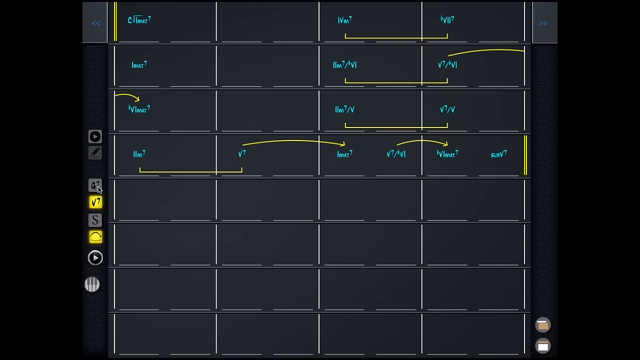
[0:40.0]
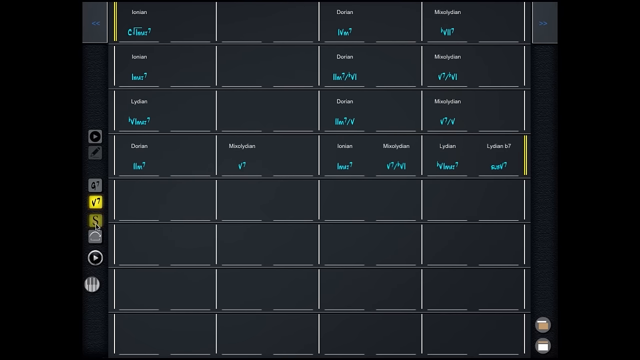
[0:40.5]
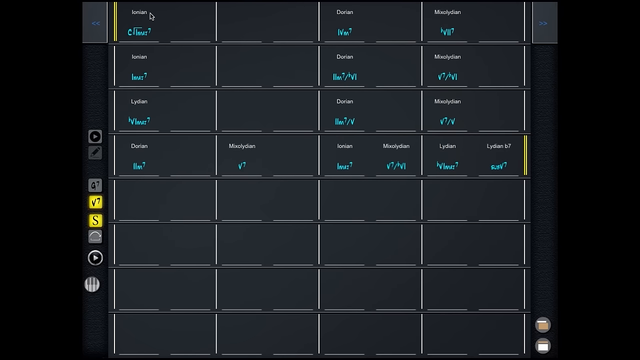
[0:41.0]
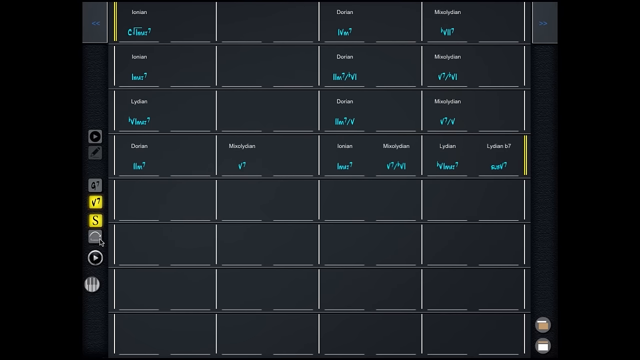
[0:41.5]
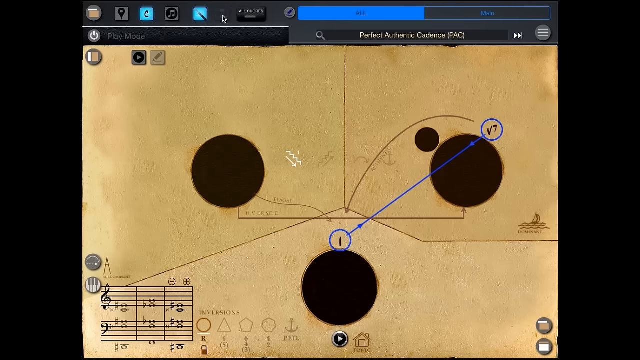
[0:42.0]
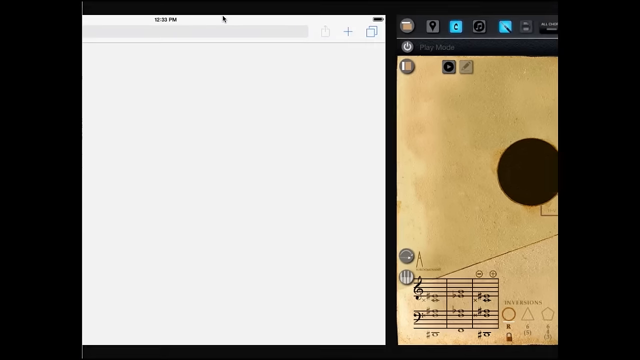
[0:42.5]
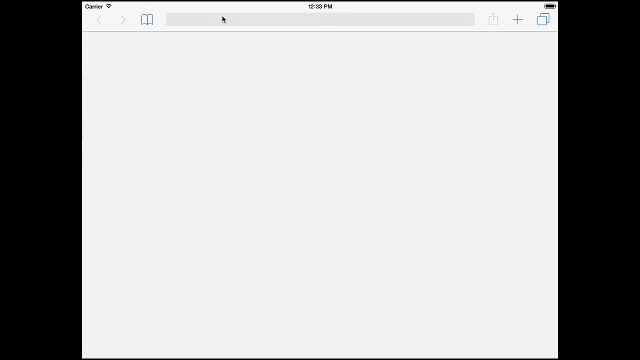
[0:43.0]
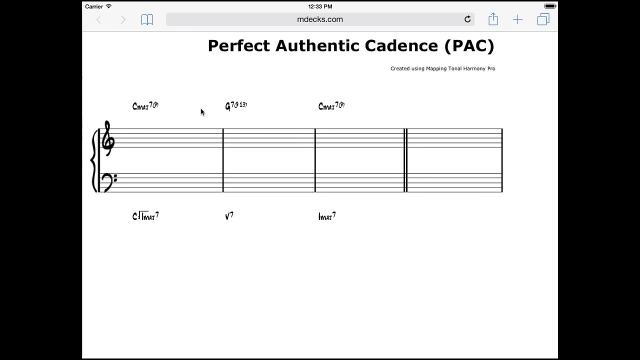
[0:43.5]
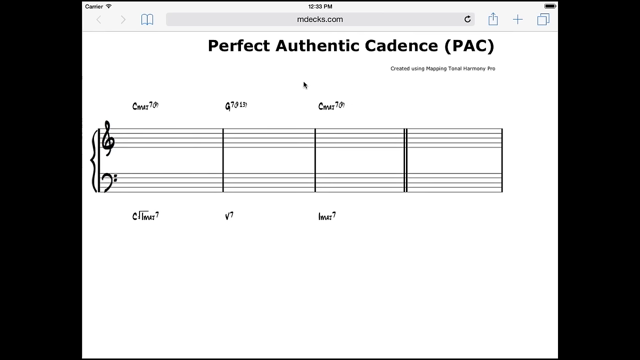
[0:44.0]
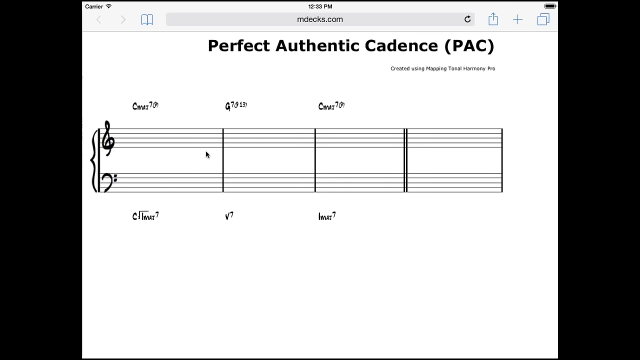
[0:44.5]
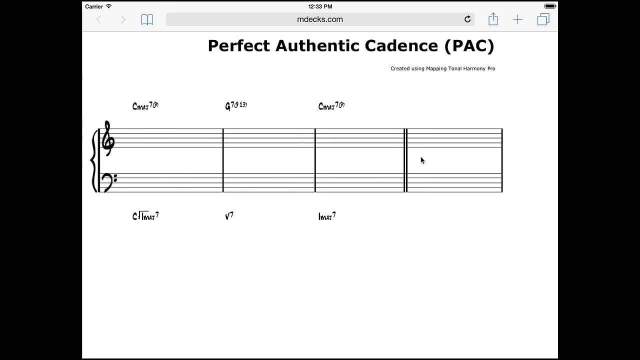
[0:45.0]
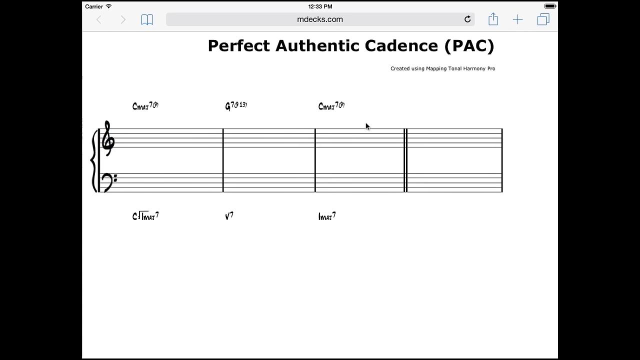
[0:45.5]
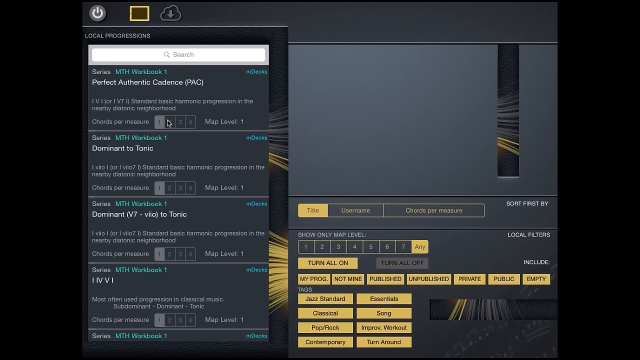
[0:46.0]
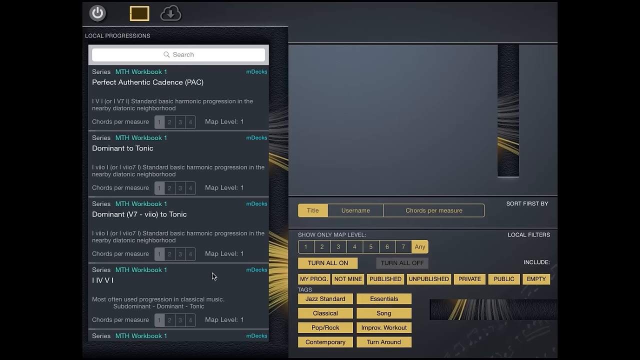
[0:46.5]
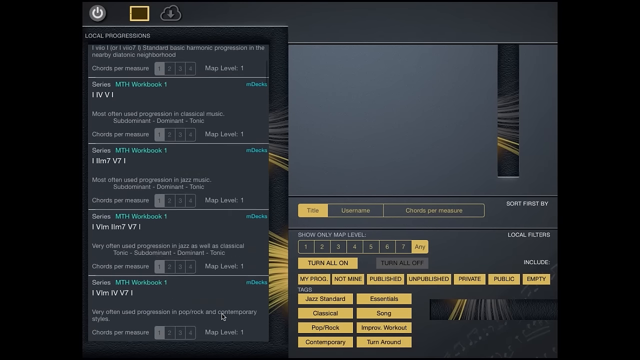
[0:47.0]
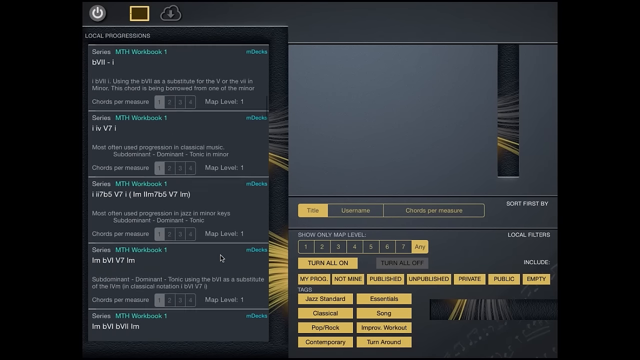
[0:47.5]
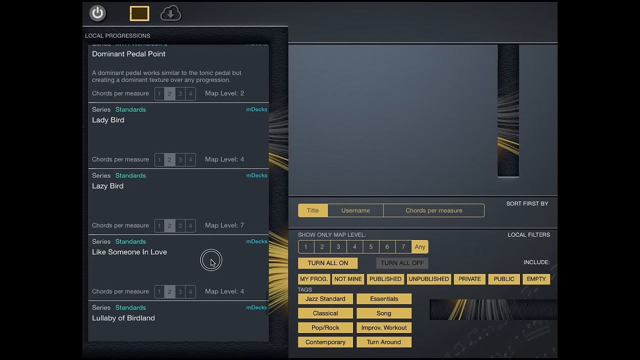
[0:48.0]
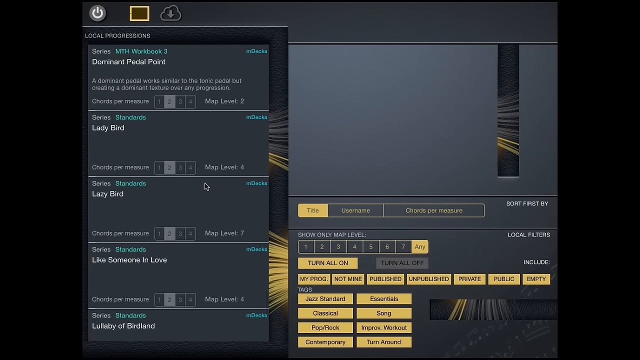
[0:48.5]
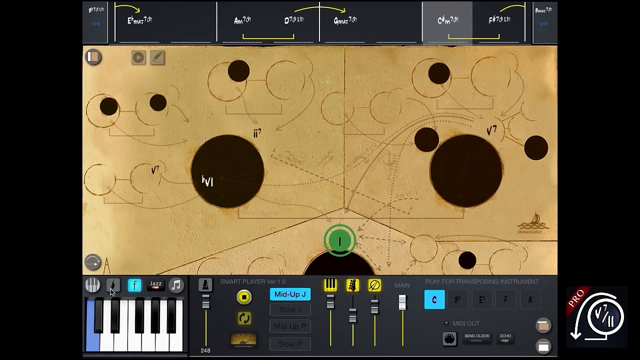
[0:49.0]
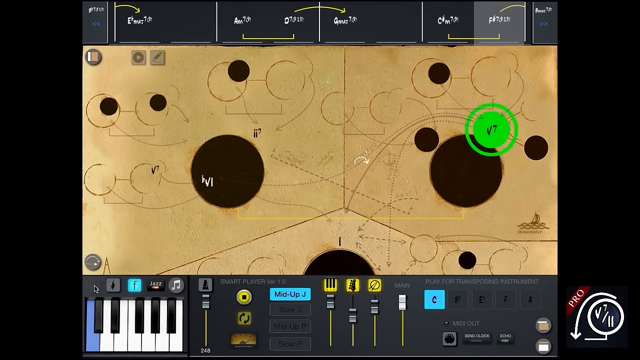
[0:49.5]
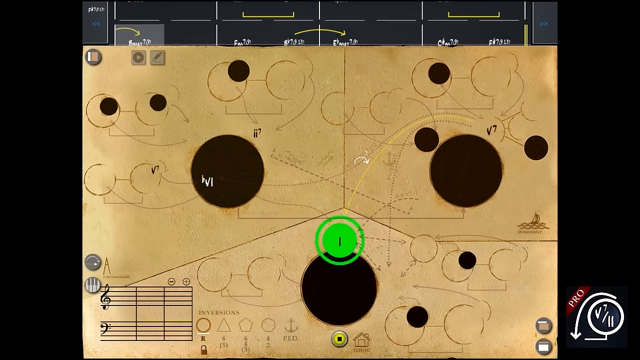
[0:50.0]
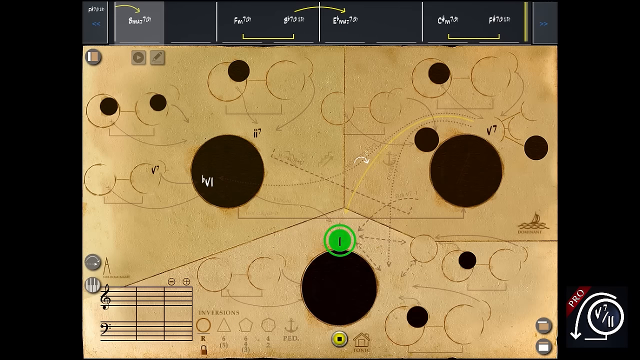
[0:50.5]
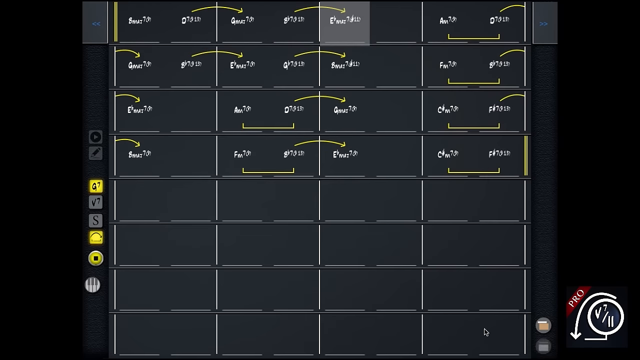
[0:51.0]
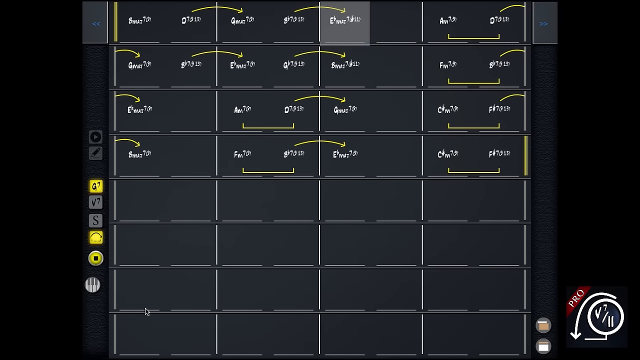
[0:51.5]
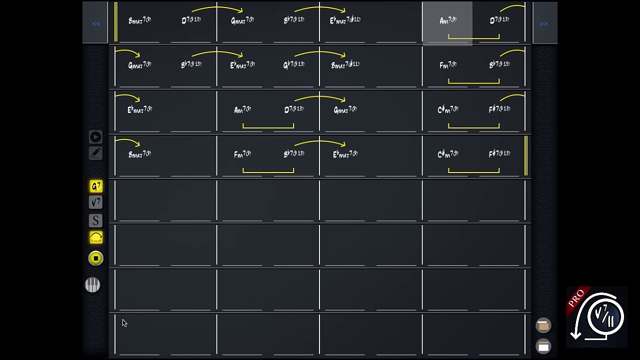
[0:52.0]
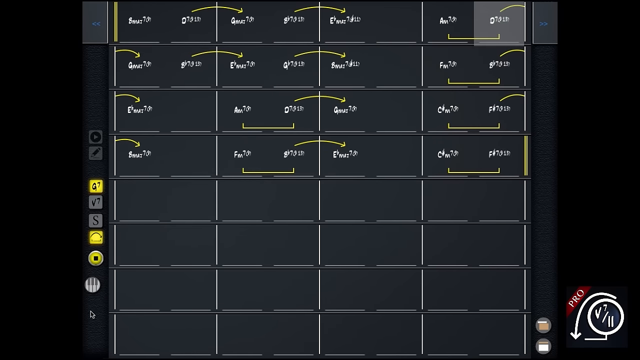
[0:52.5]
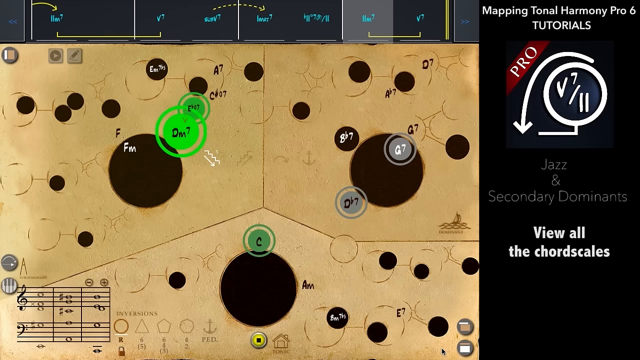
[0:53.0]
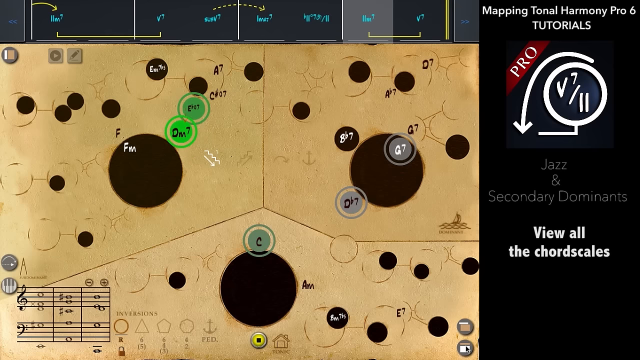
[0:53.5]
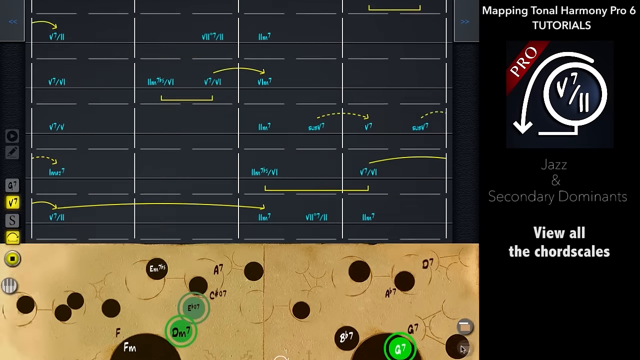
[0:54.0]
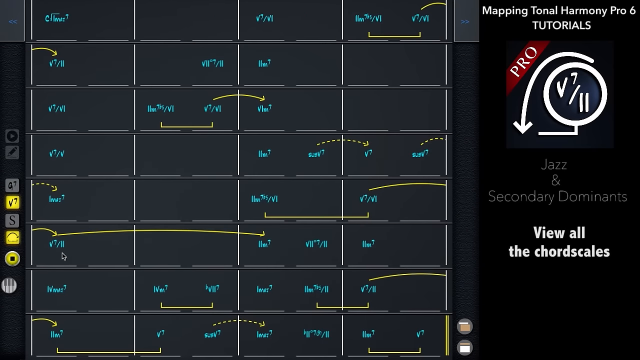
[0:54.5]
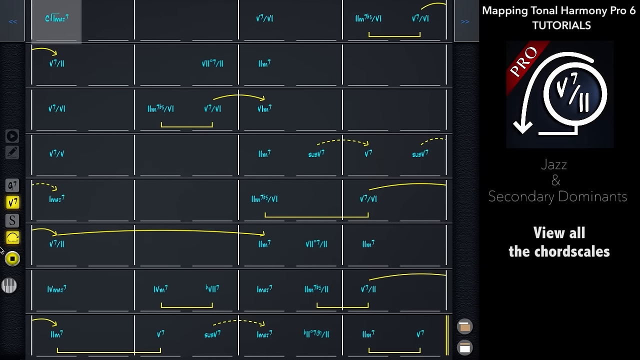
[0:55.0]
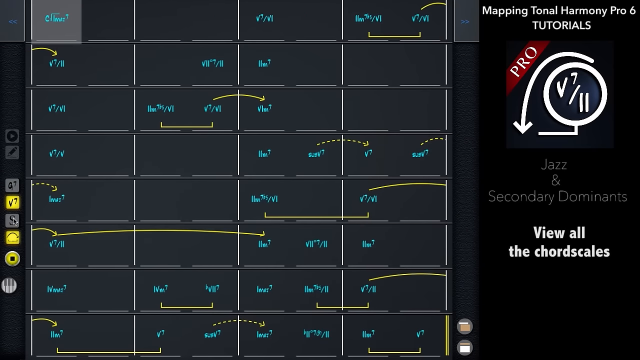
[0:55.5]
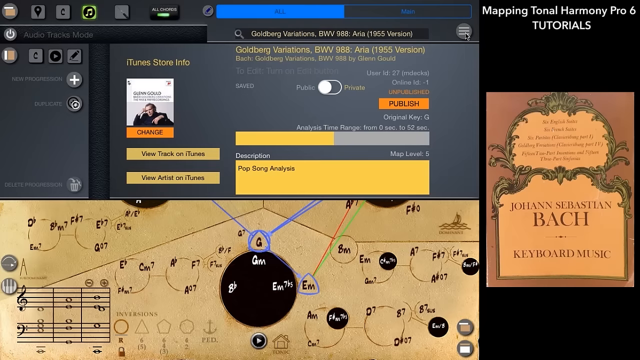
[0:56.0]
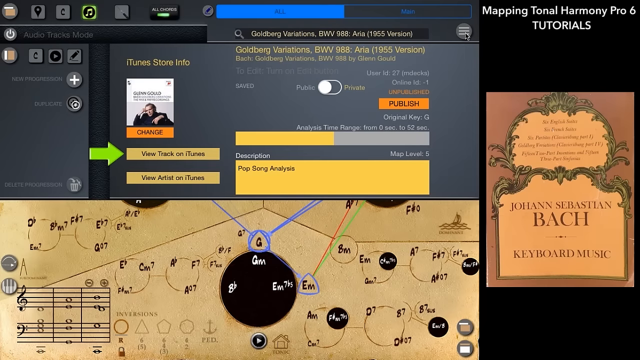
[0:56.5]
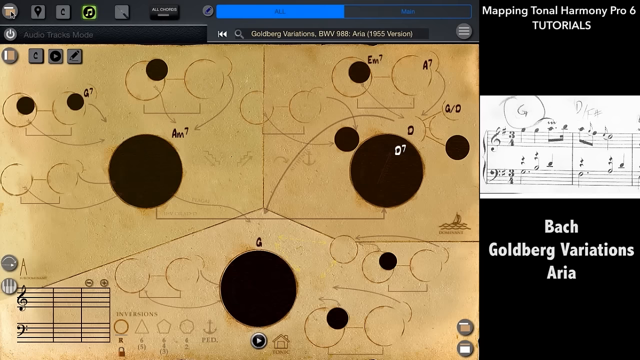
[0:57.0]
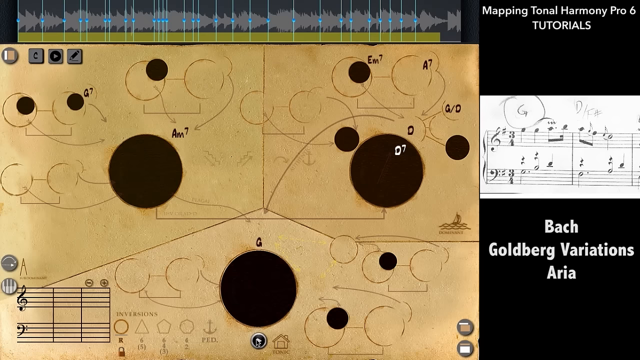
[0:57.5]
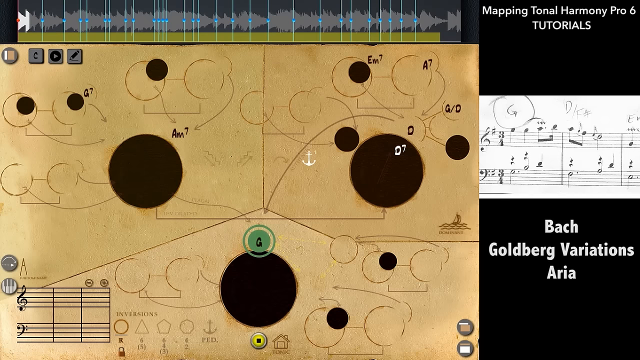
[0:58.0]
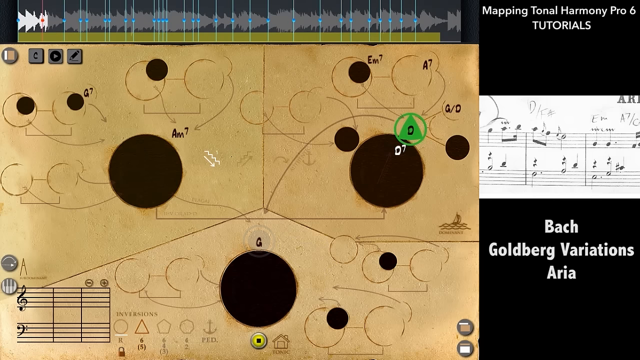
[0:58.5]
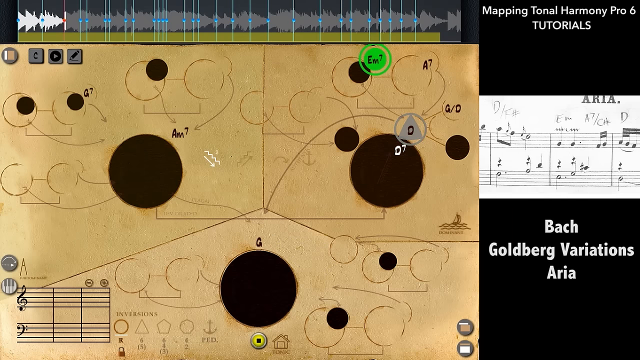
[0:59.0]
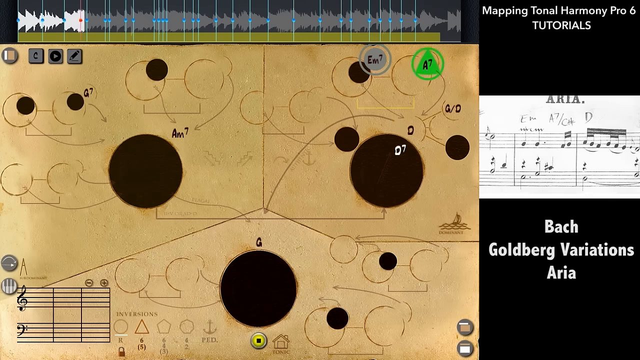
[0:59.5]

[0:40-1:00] Another interface appears, showing a chart with white lines on a black background. Indistinct blue lettering fills certain sections, mostly the top four rows except for the second column. After briefly showing this, the video returns to the brown cube, which then transitions off the screen to the right to reveal some sort of interface with a white background. Suddenly a section of notes appears over the white background. At the top there appears to be an address bar with icons on both sides. Above the music section is the text "Perfect Authentic Cadence, PAC". The mouse hovers over the note section, moving from left to right and then up slightly. The screen then transitions to more menus: on the left is a small section showing different options, and on the right is the main window with adjustments at the bottom. This transitions off the screen back to the brown cube background. The circles are highlighted very briefly, and this is swept off to the bottom of the screen to return to the black graph. All of the squares in the top four rows have text in them, and many parts of the text have a yellow scroll to the next block of text. Some blocks of text are highlighted very briefly before the window is removed from view and the brown cube drawing returns. This also transitions to the bottom of the screen, giving way to another black chart, shown very briefly before the video returns to the brown chart with another overlay on it. On top is what appears to be an iTunes Store window, and on the right side is a cover for Johann Sebastian Bach keyboard music. This is removed from view, and the window on the right is replaced with a music sheet with the text "Bach Goldberg Variations Aria" below it. The music sheet is scrolled through to the right.